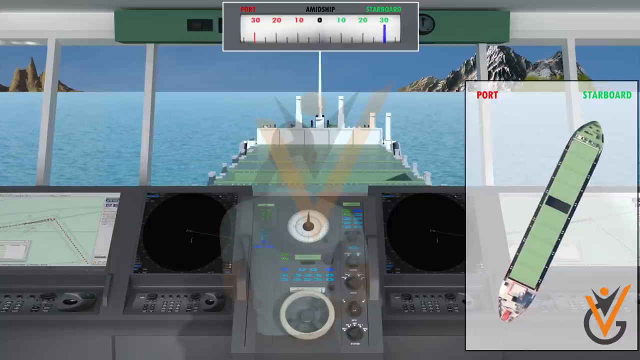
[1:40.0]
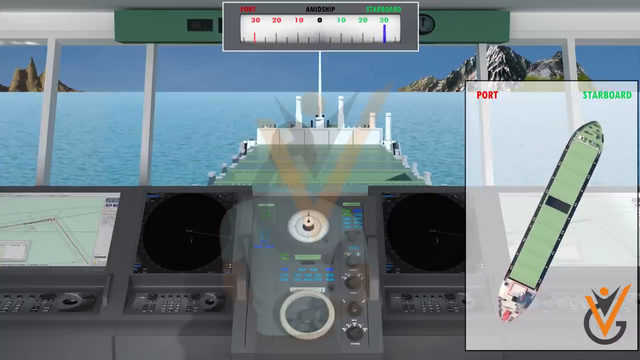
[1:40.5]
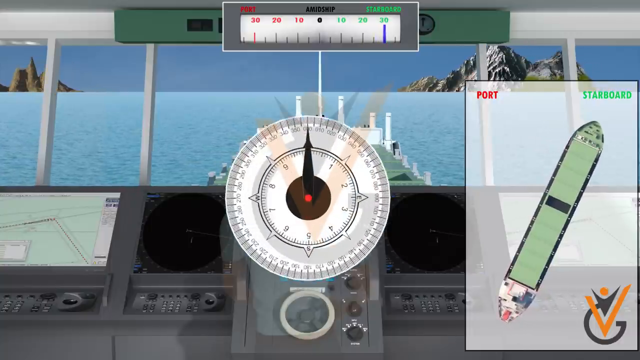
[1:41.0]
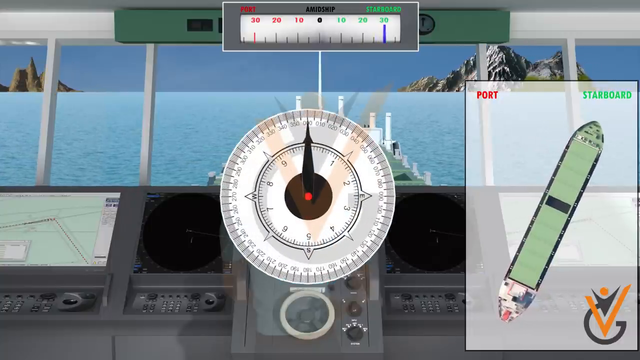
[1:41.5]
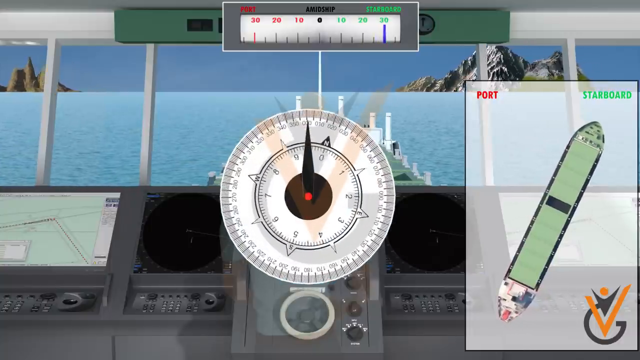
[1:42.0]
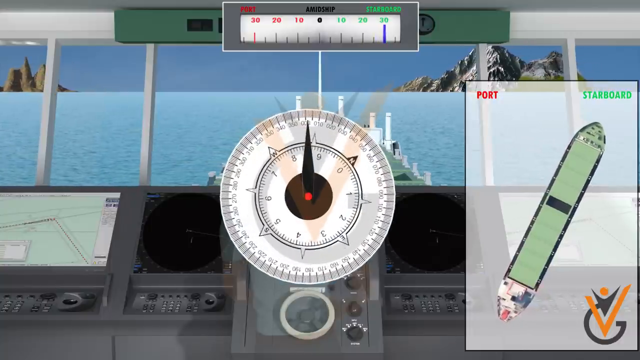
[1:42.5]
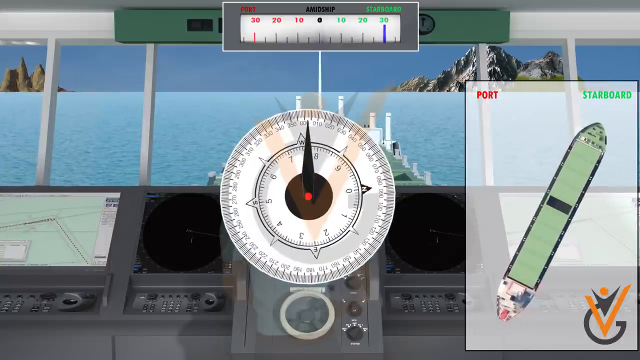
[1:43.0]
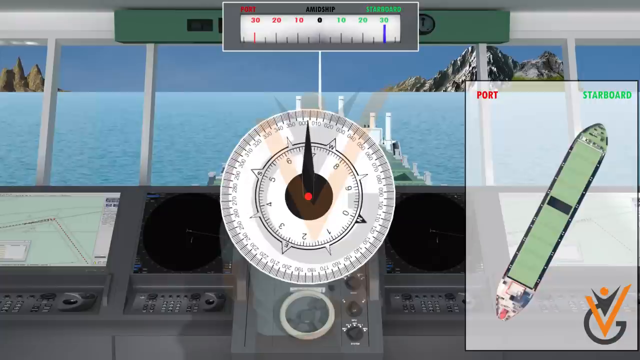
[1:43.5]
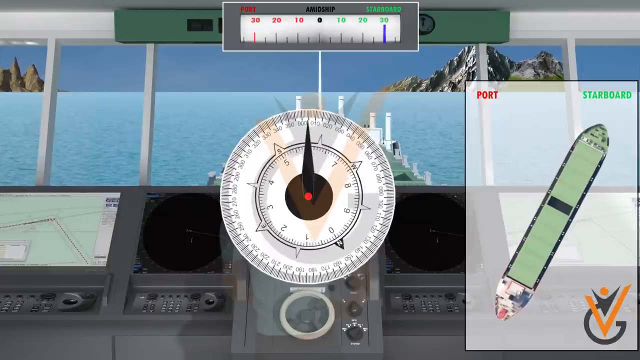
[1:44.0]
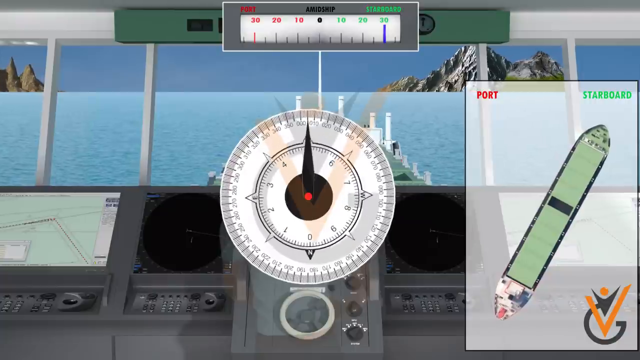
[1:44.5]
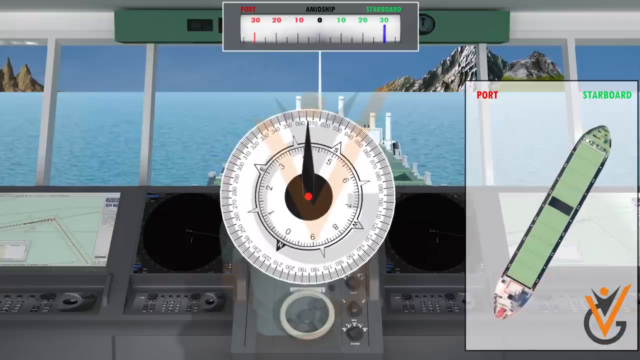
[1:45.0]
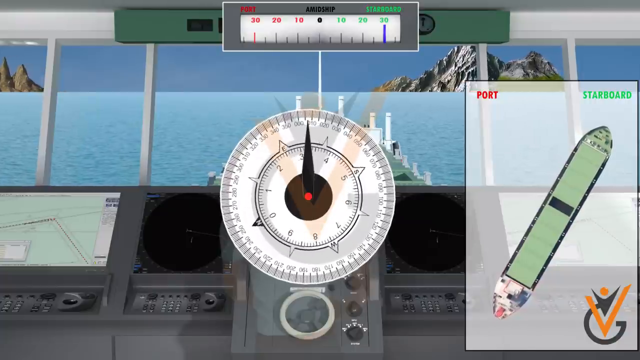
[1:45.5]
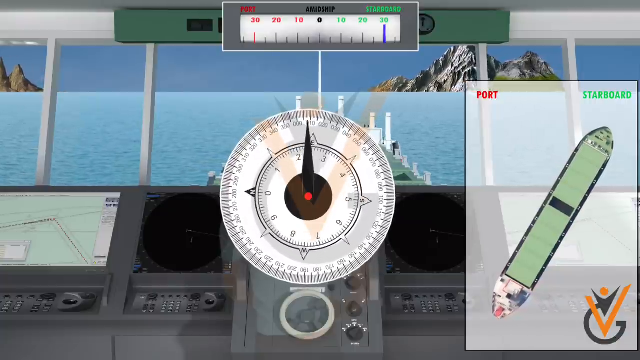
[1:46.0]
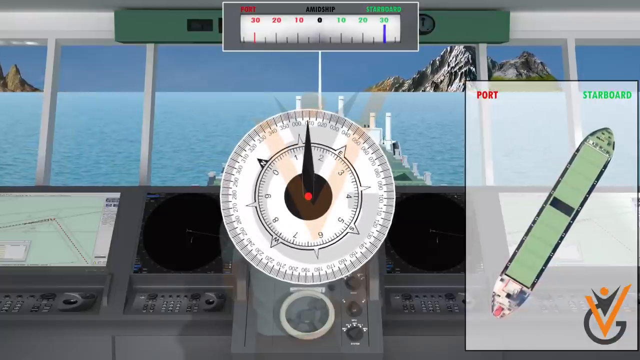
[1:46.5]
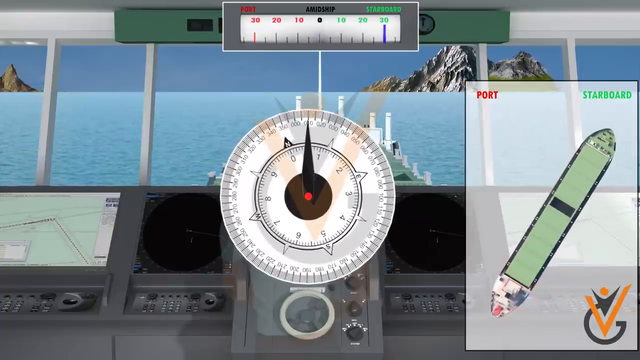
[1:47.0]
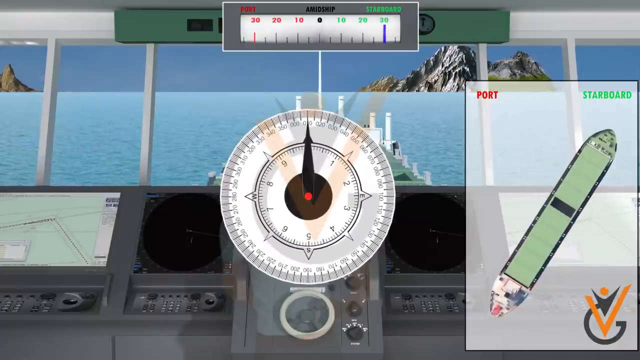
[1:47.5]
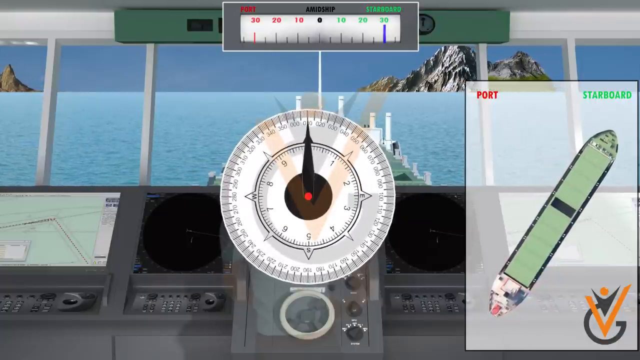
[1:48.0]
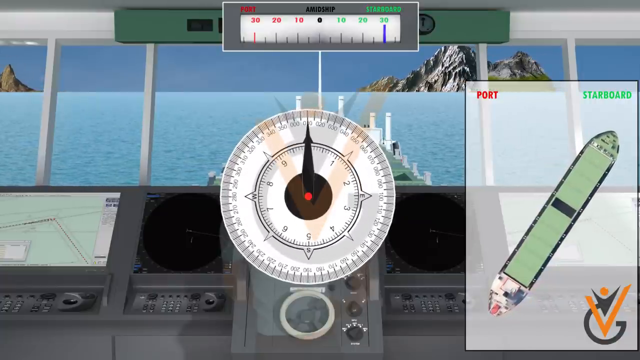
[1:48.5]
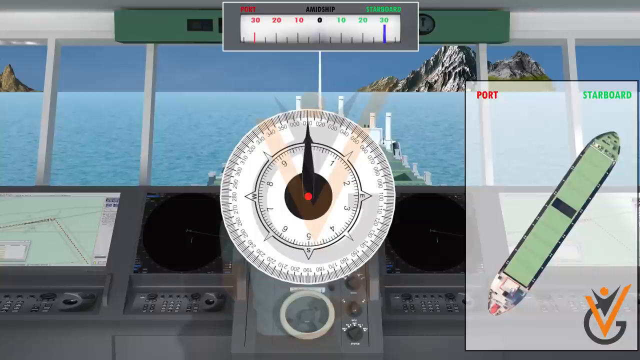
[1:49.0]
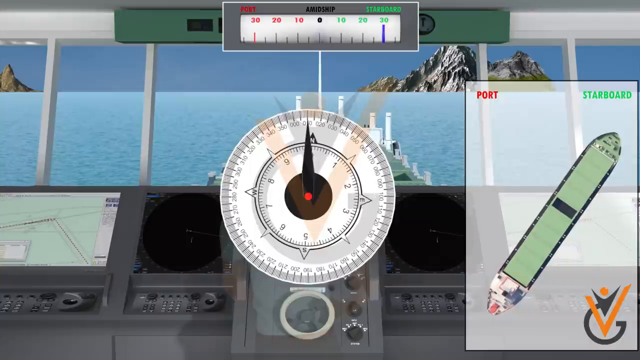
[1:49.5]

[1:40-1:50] The gauge on the steering column is enlarged and highlighted. It begins to turn toward the left as the boat is moved toward the right, or starboard. The demonstration seems to indicate the boat being moved very far toward starboard, maybe even that the boat is about to be turned around. As the boat moves to starboard, another rectangular gauge at the top of the screen goes all the way to the 30 mark. A large mountain range is seen in the background as the boat moves toward it, and part of a mountain range is on the left side of the screen.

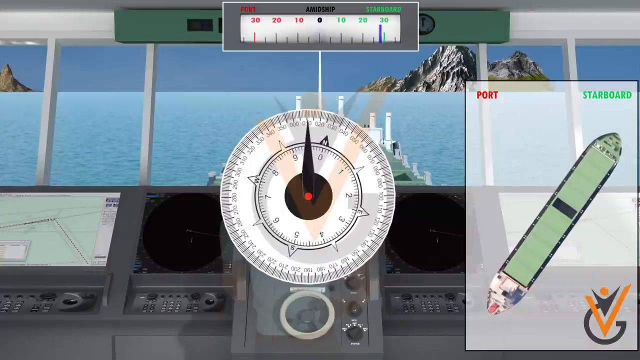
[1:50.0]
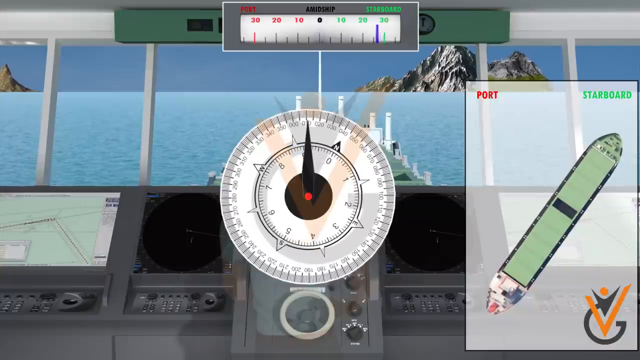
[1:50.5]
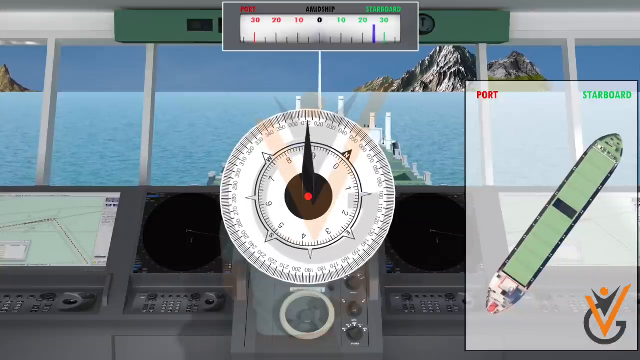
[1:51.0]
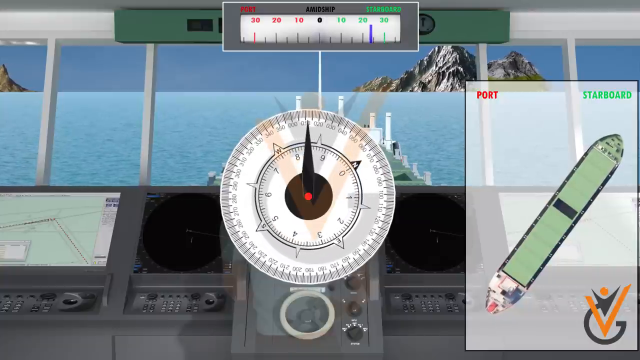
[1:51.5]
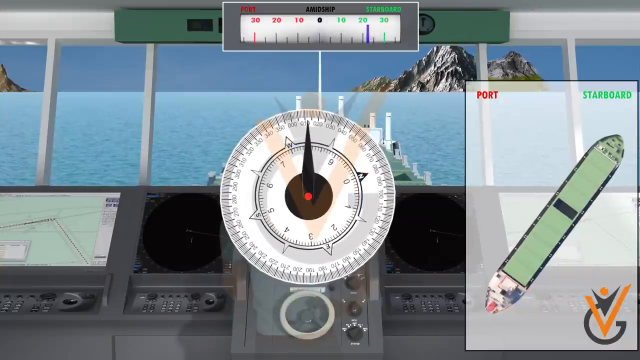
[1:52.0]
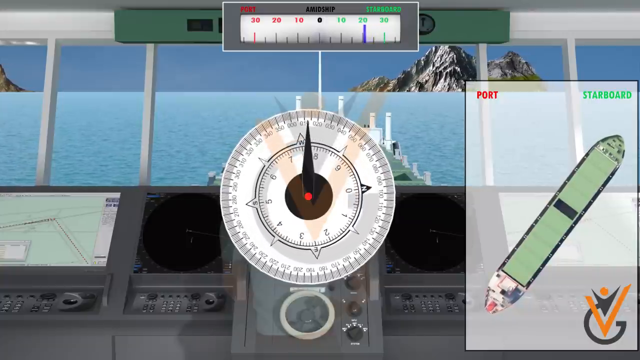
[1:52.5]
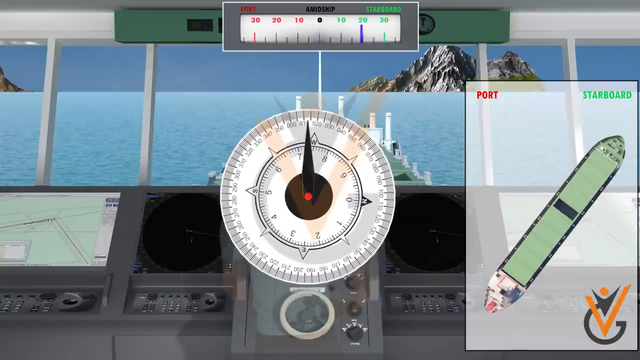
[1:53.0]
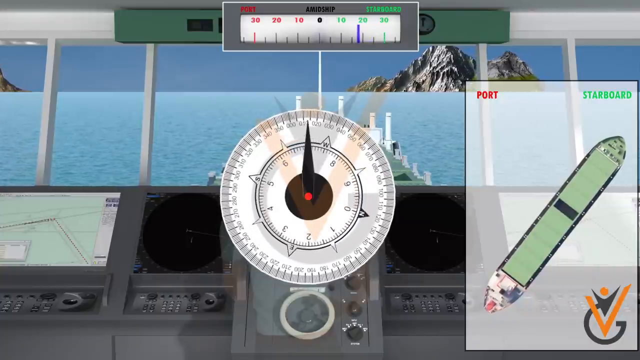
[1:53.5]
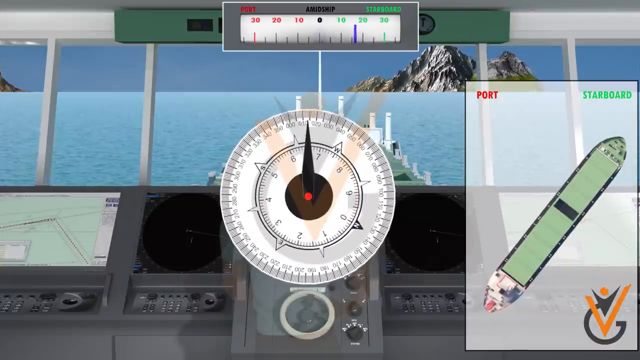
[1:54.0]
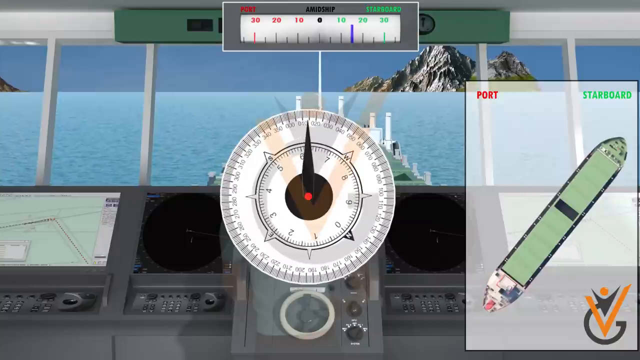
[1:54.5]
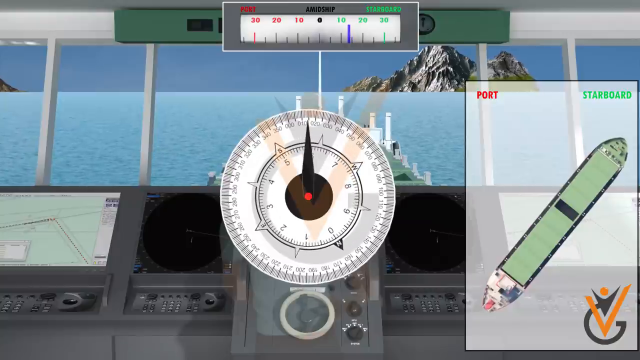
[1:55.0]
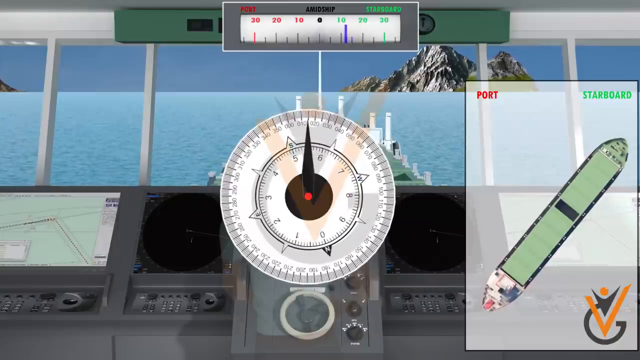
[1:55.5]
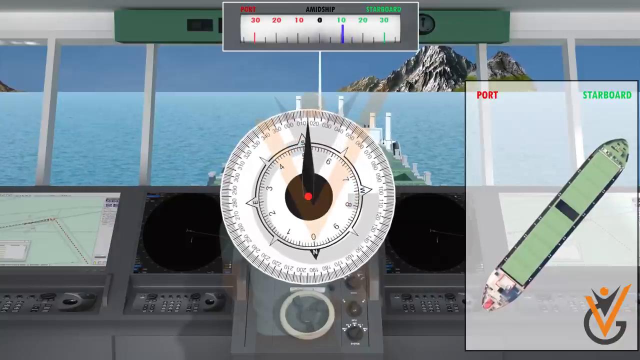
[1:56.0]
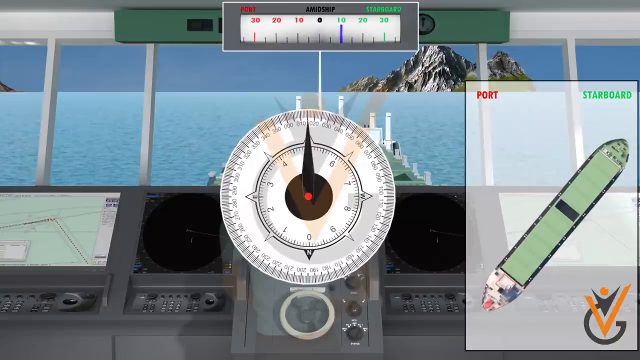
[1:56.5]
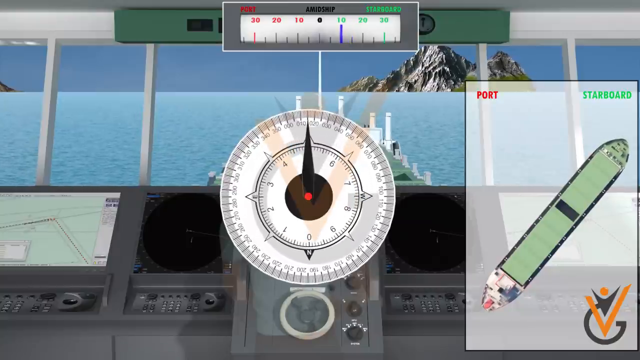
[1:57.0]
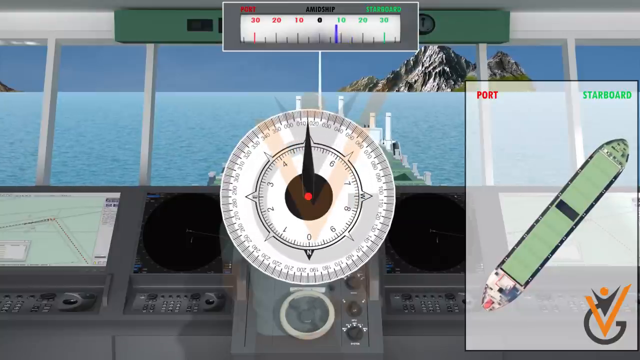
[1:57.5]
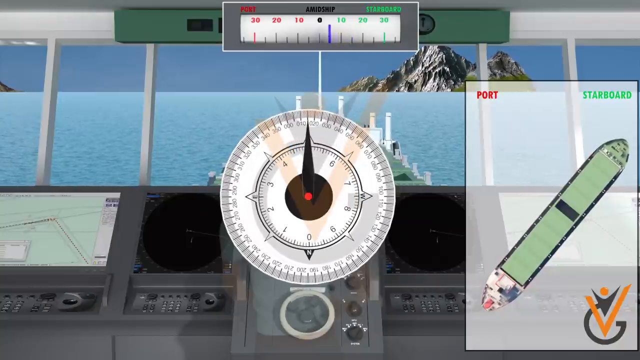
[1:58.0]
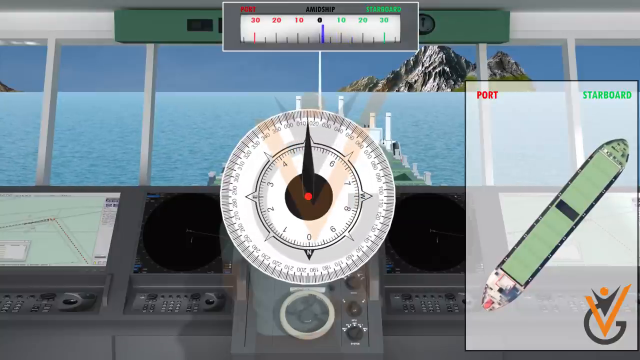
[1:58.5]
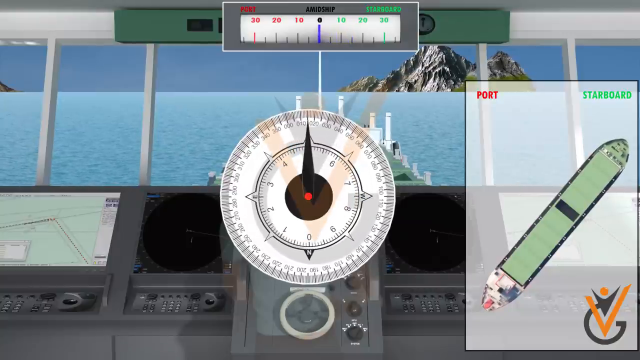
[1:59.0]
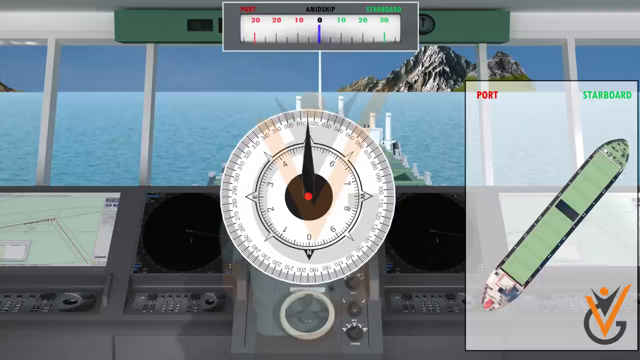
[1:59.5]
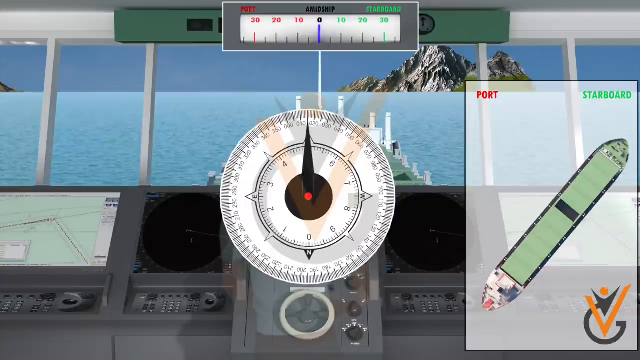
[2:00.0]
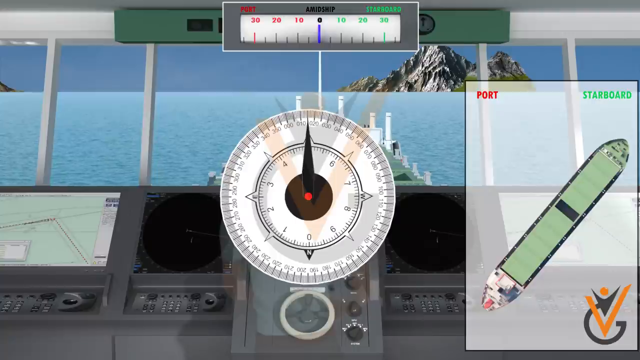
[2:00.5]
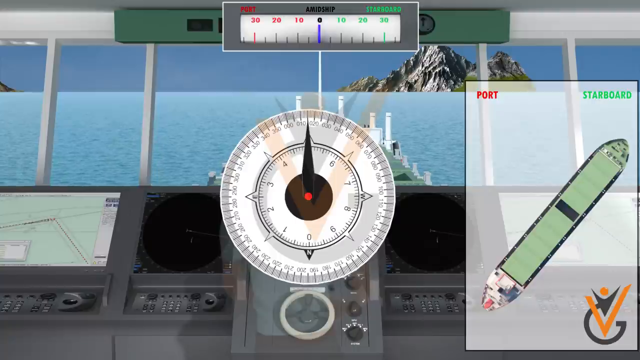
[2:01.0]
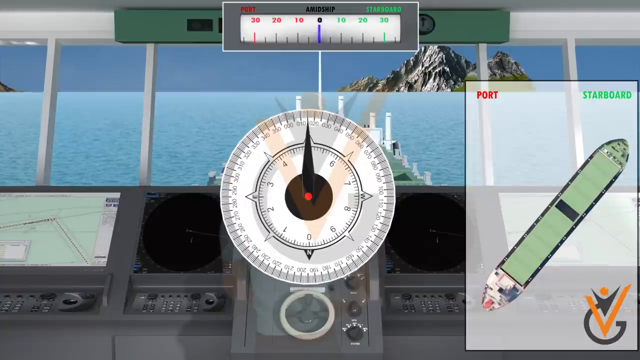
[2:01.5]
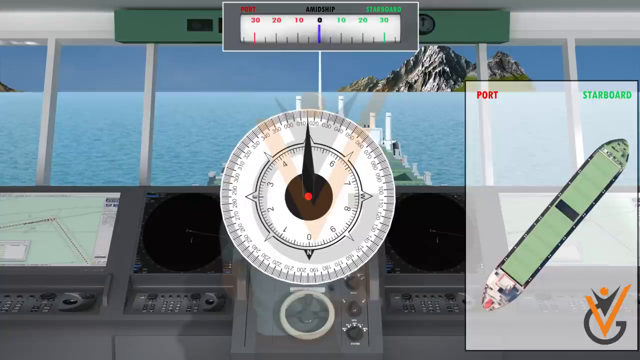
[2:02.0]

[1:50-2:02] The gauge on the simulated steering column is highlighted again, its arrow moving toward the left as the boat is steered toward the right. On the right side of the picture, a demonstration shows the boat being moved to the extreme right, or starboard direction. A mountain range appears in the background, and the gauge at the top of the screen shows the boat moved to the green 30, the extreme starboard direction.